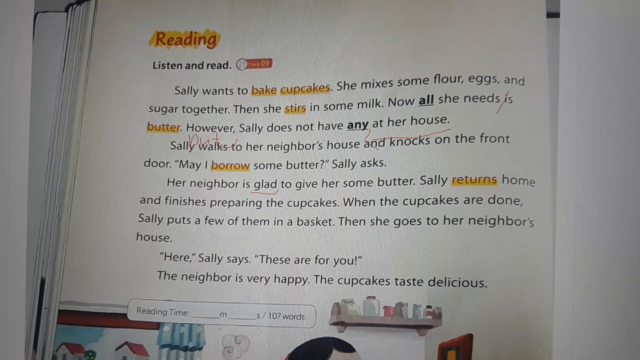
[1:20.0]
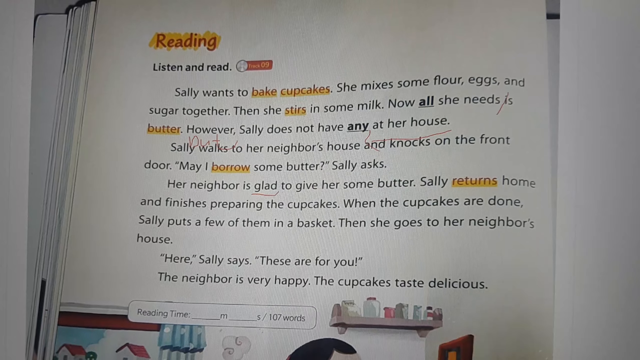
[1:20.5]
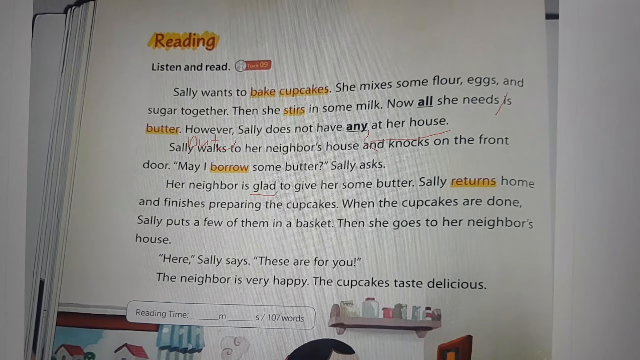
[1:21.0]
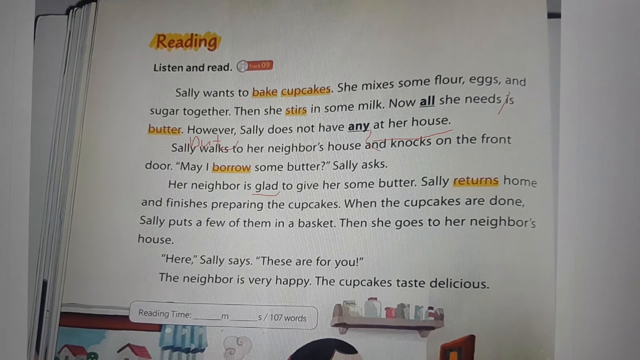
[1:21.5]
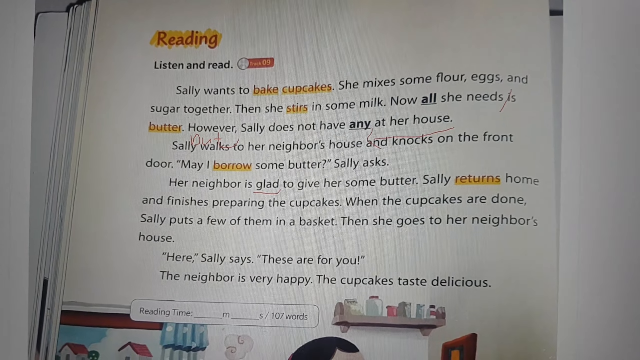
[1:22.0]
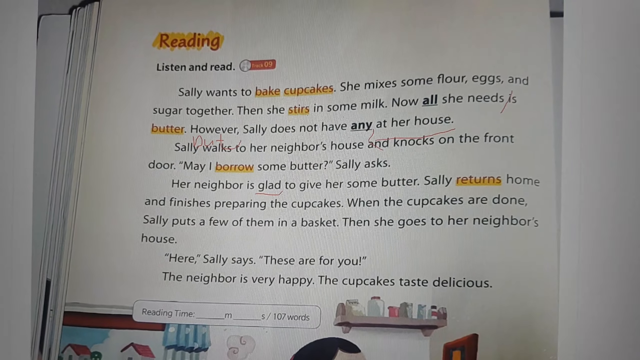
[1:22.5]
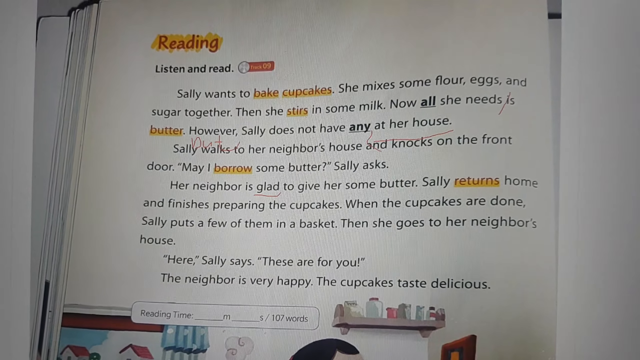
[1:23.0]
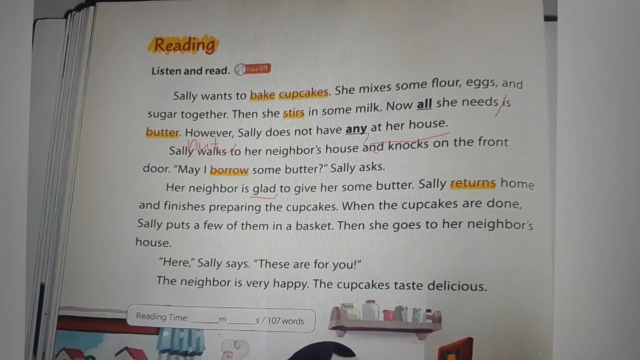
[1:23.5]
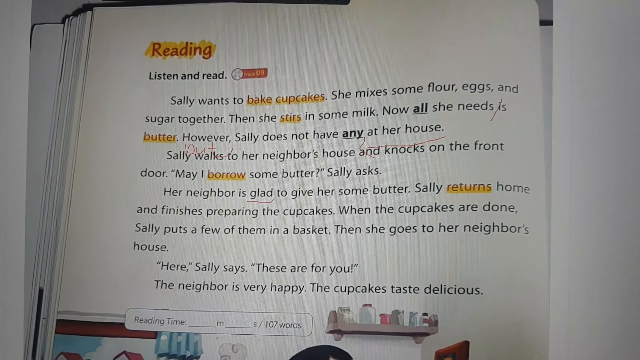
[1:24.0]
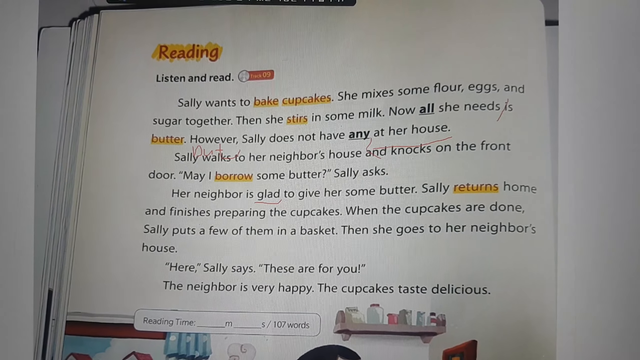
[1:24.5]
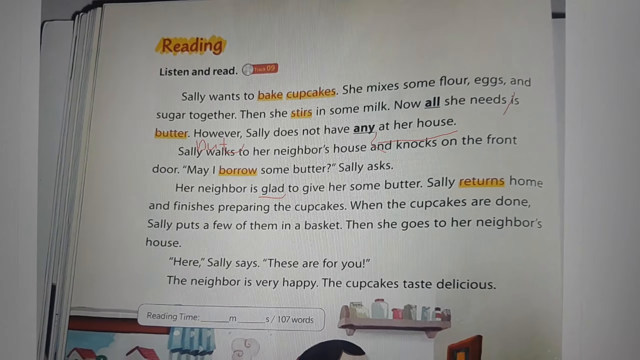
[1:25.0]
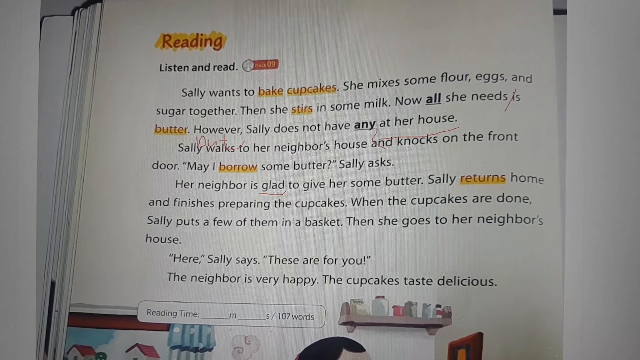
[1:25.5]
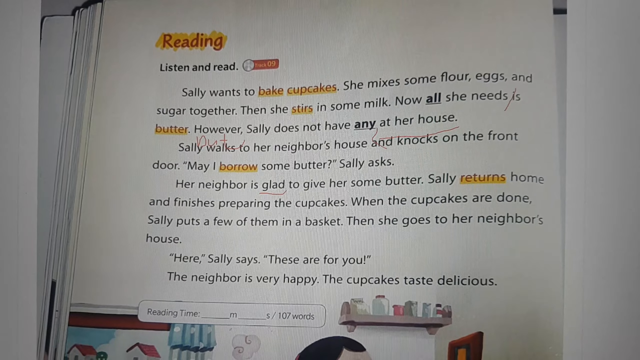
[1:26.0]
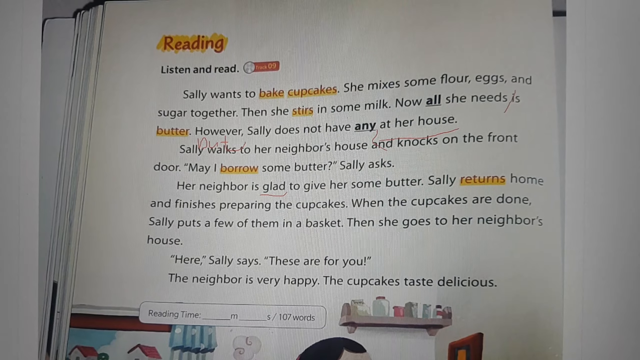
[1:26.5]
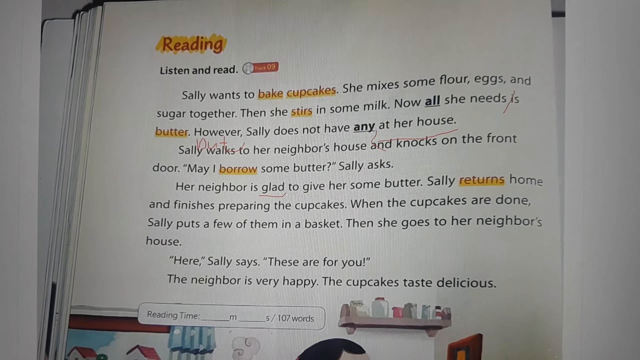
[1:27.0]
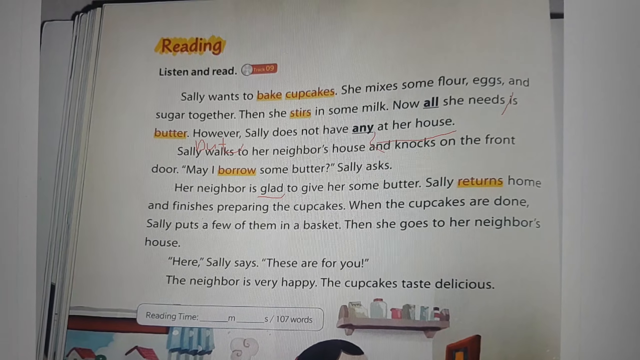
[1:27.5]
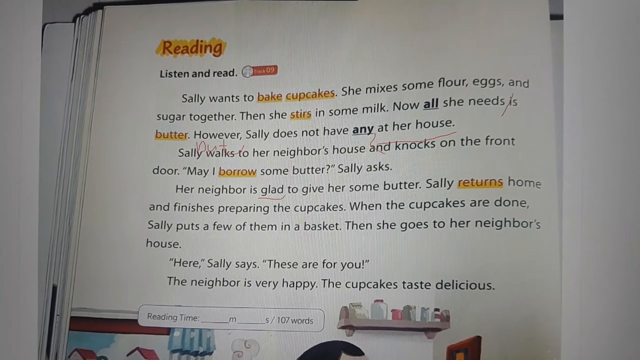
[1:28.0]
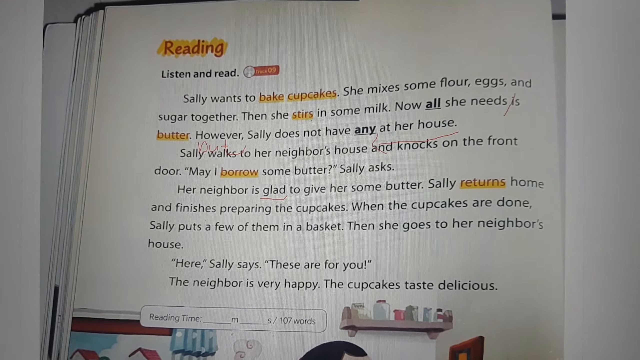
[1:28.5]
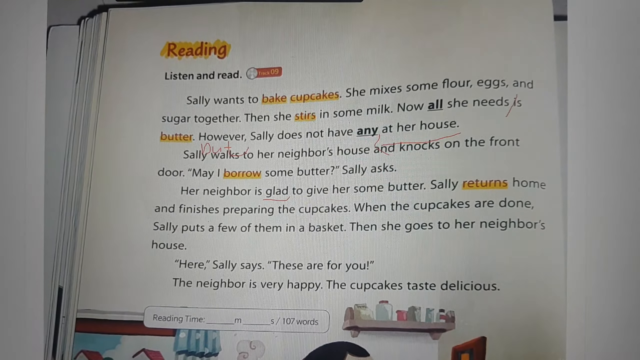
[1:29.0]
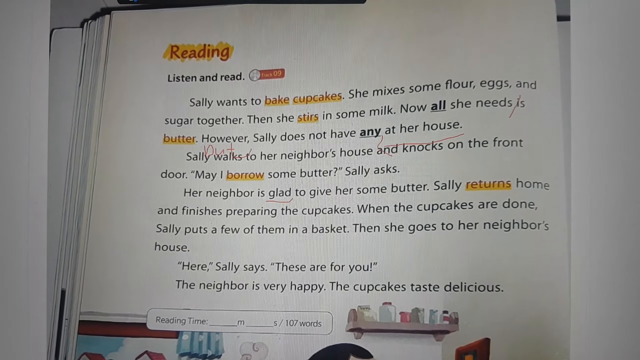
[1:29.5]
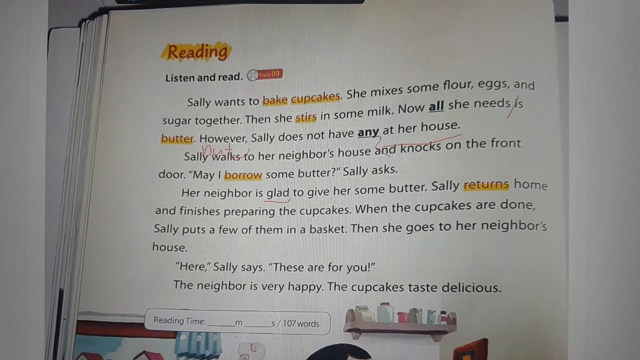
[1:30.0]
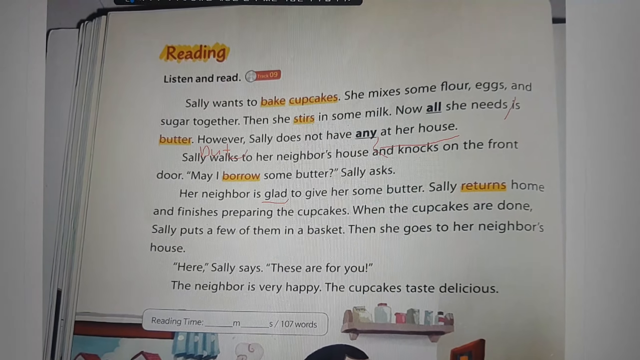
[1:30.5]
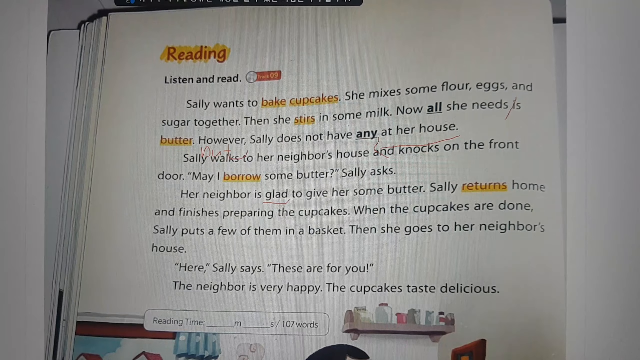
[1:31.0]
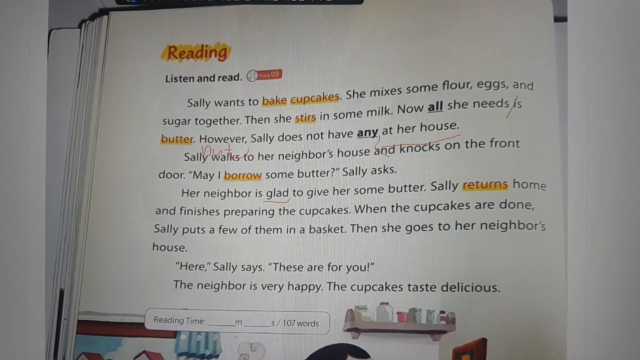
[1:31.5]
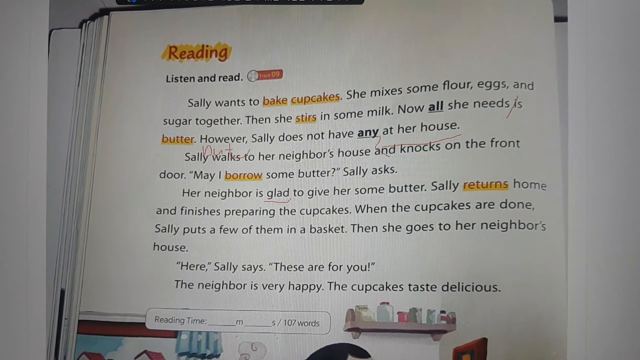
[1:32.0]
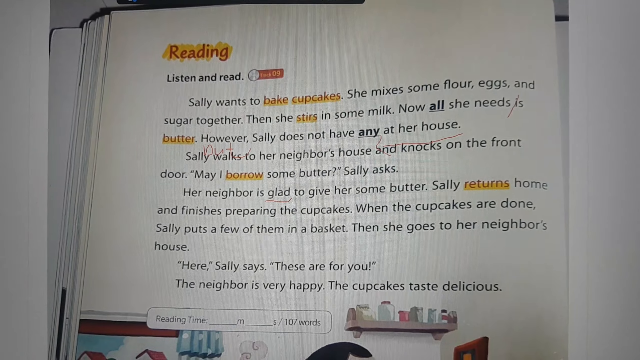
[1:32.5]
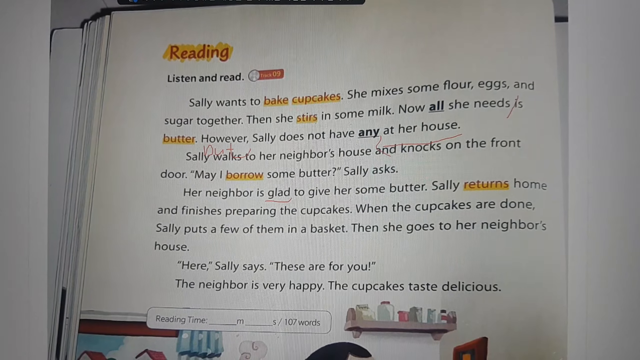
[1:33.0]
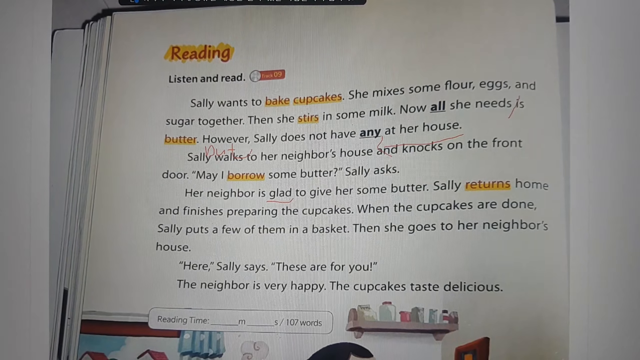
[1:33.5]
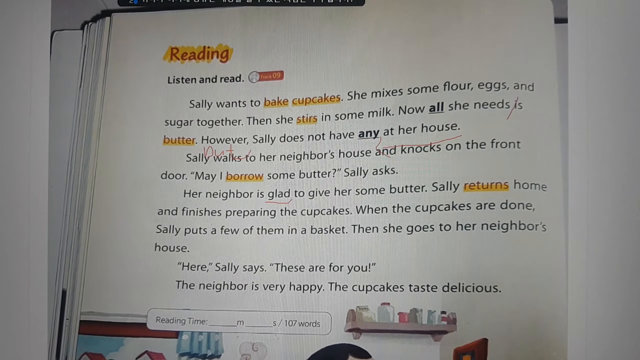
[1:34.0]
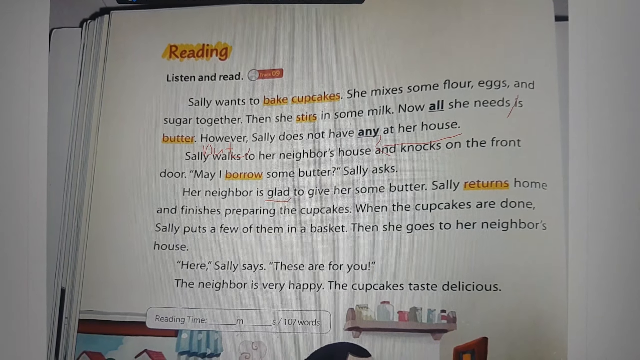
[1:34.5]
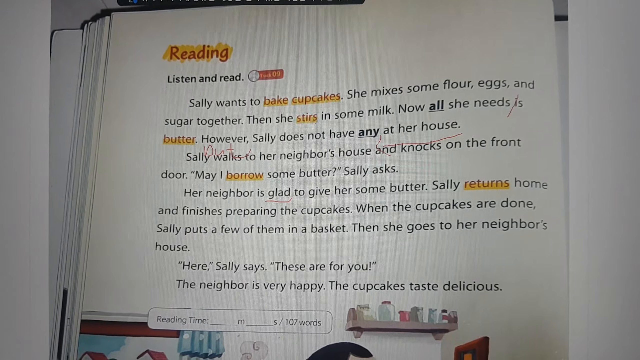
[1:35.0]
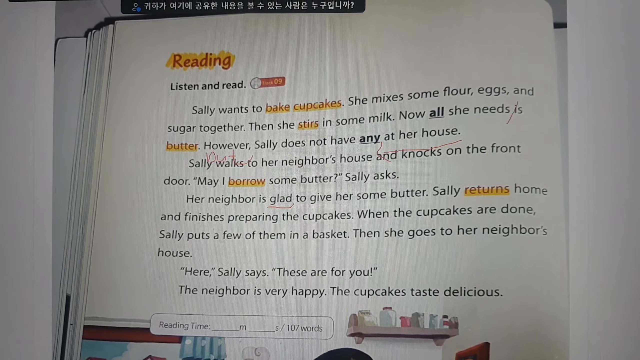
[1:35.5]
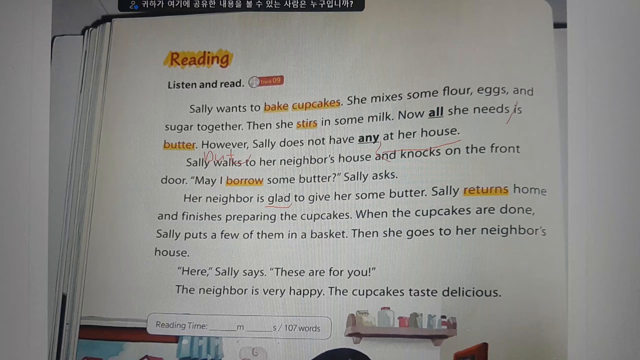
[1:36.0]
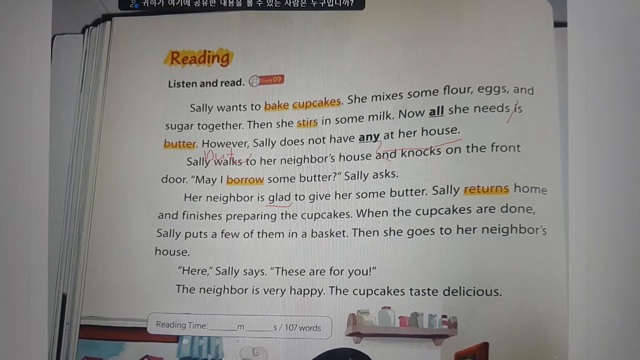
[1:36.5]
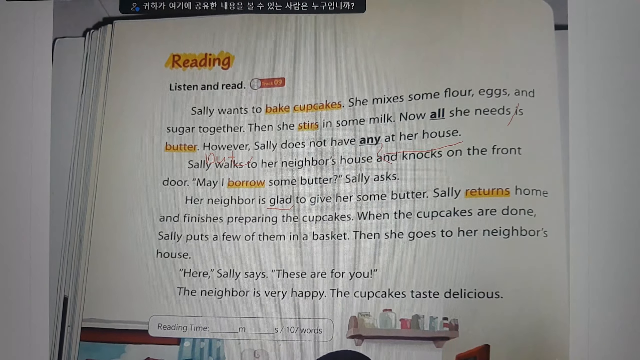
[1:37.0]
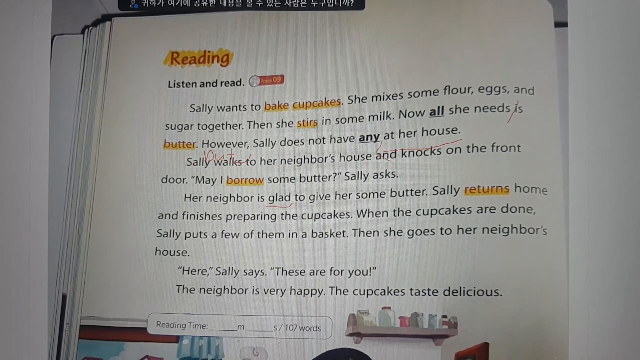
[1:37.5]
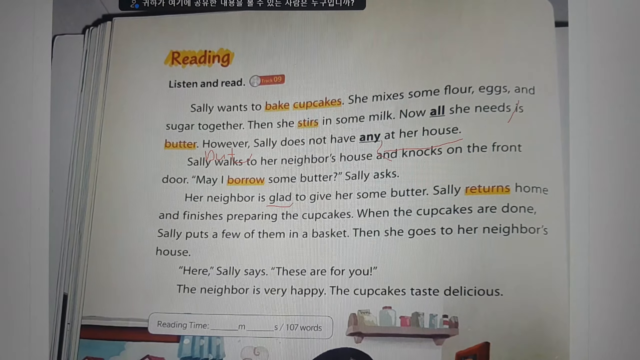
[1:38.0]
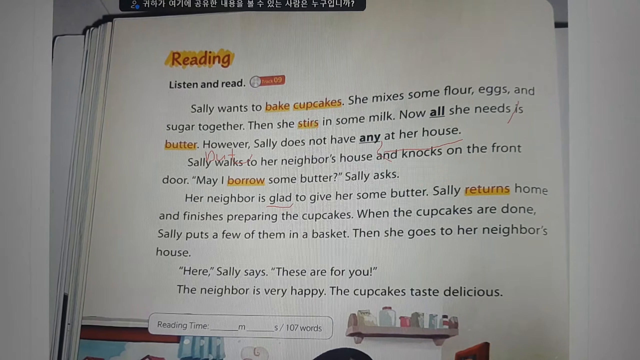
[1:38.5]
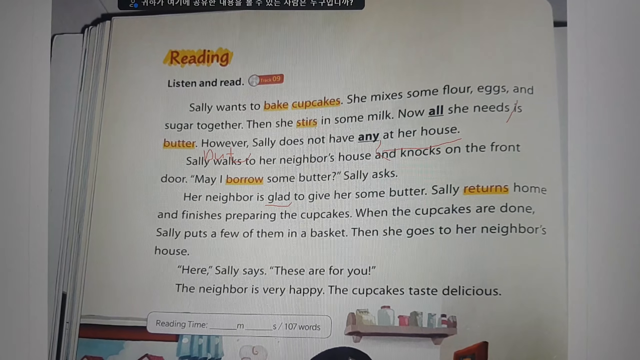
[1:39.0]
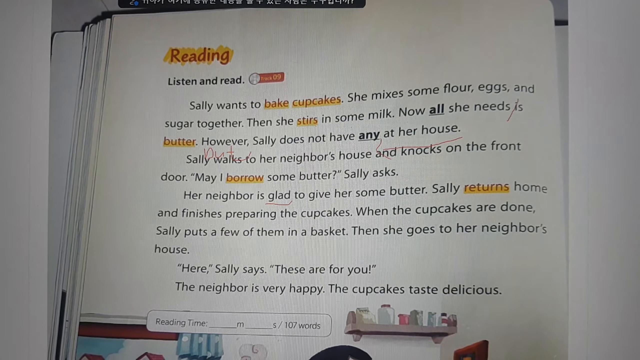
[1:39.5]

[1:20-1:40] The same static view of the page with the story continues; the person recording is never shown. The page looks like it may be the beginning of a story, with no next page visible. At the bottom there are graphics or drawings: a shelf with a bunch of different pots and jars, including a jar with sort of a glass jar at the top, a smaller red jar, and a bottle with a brown top, on what looks like a wooden shelf.